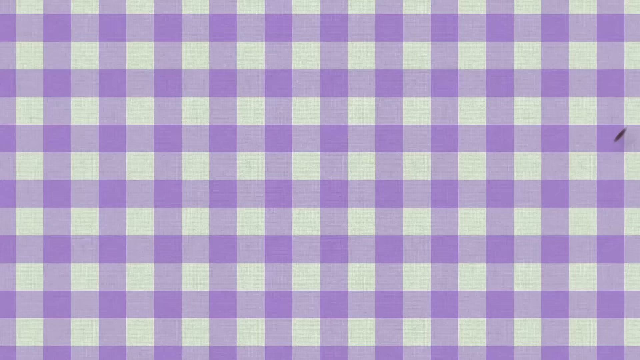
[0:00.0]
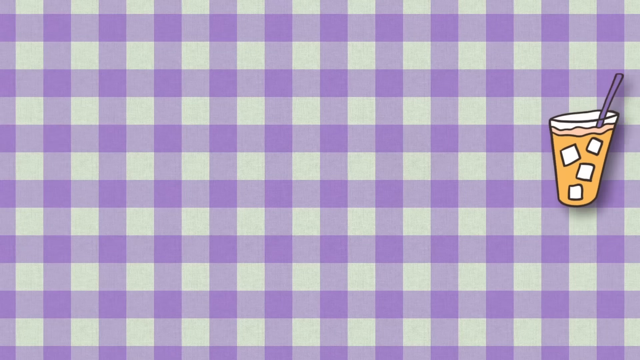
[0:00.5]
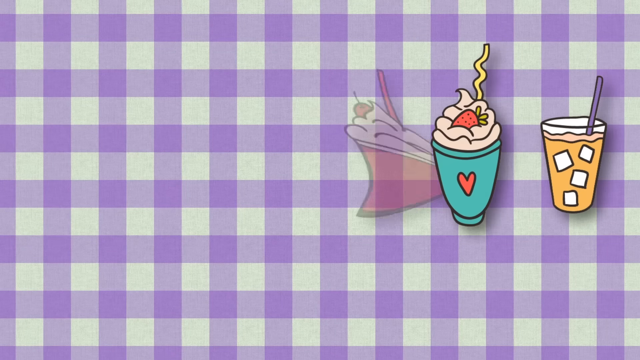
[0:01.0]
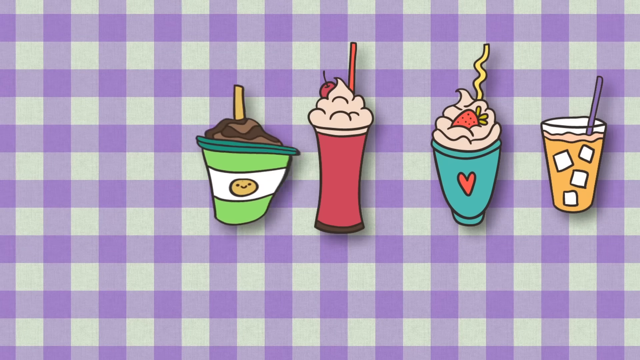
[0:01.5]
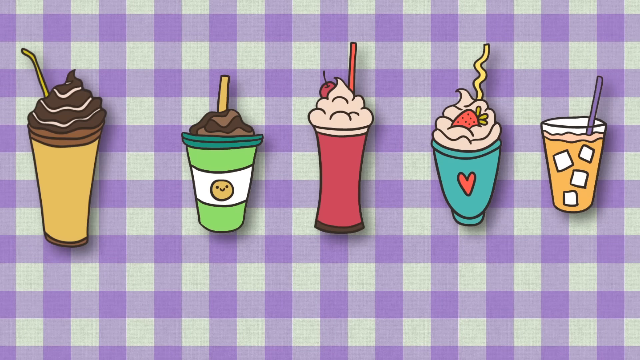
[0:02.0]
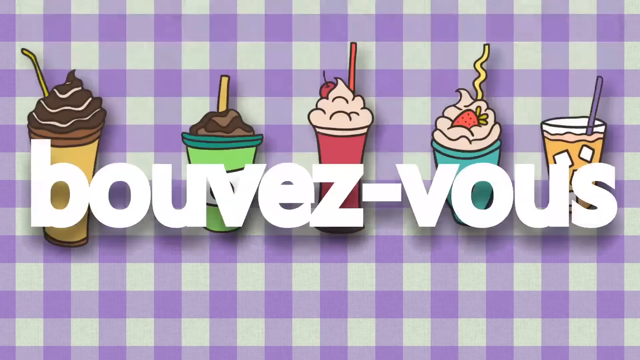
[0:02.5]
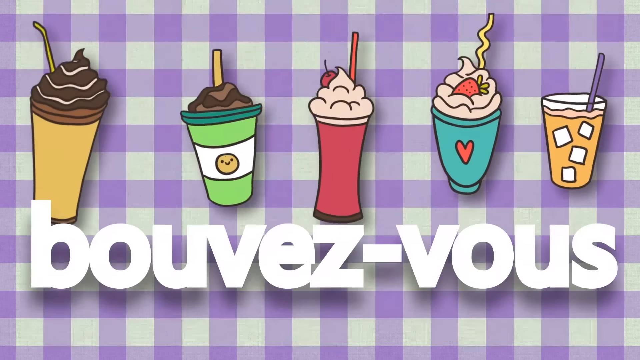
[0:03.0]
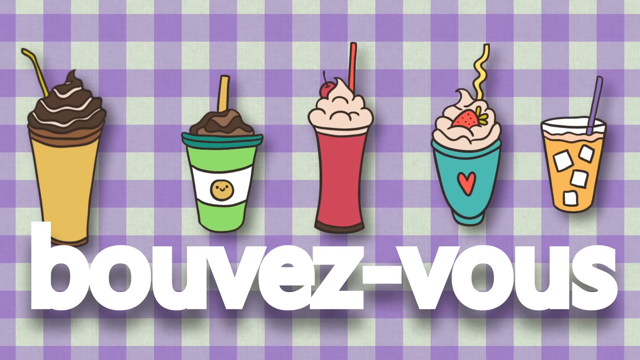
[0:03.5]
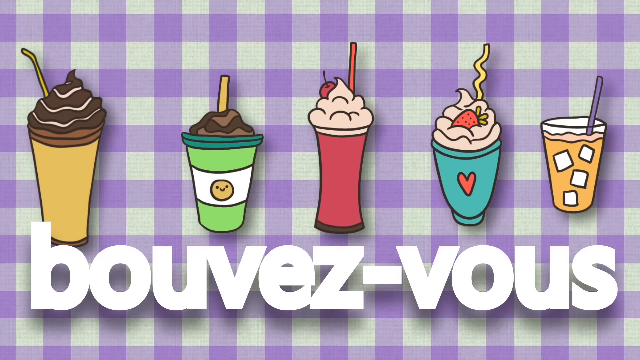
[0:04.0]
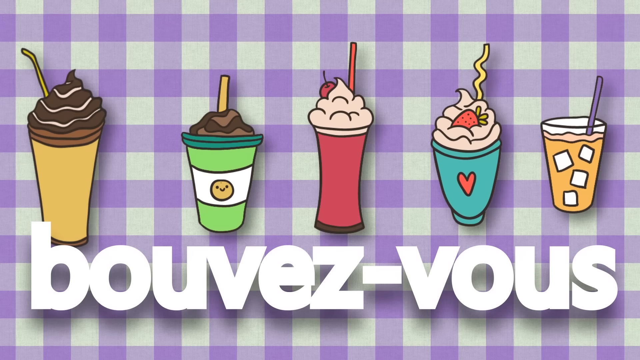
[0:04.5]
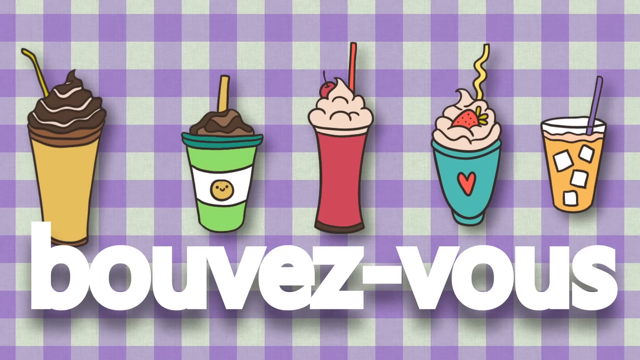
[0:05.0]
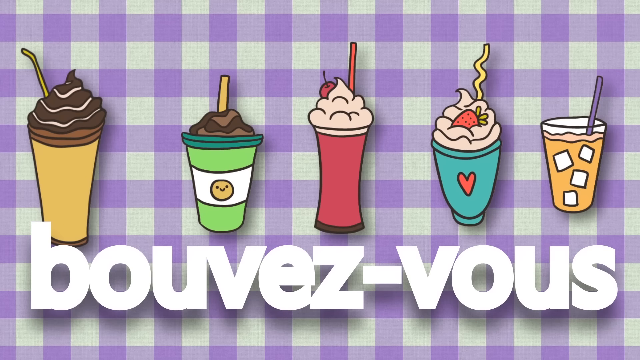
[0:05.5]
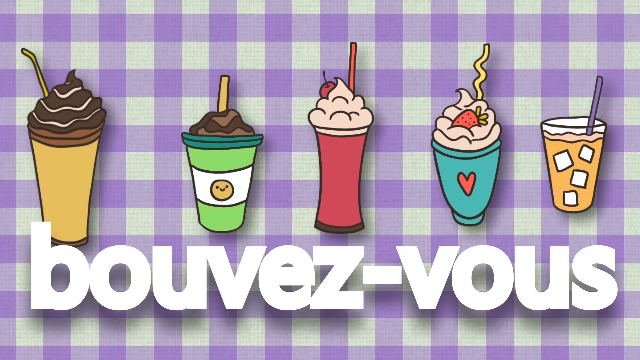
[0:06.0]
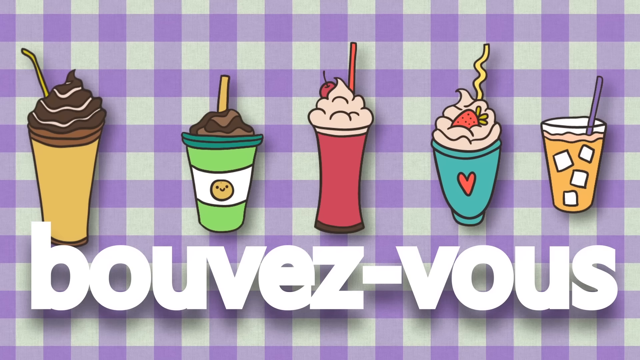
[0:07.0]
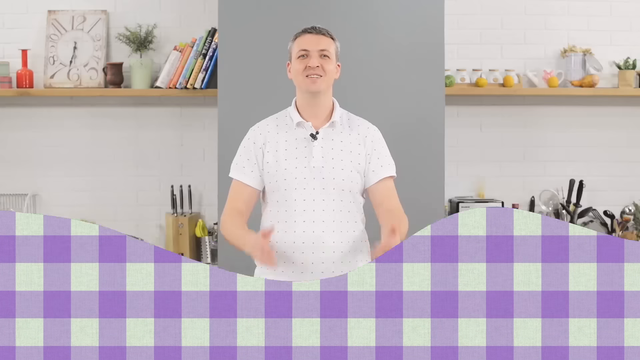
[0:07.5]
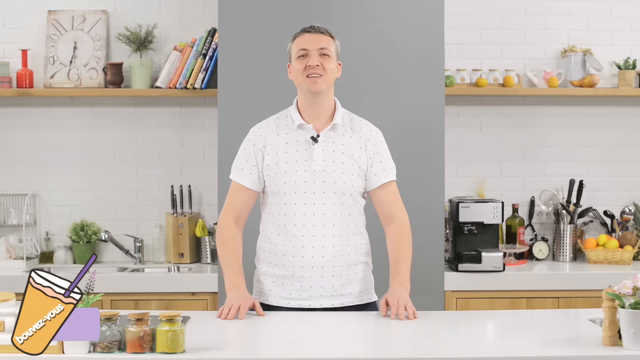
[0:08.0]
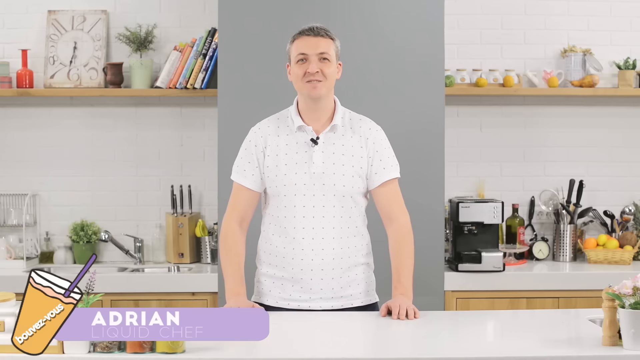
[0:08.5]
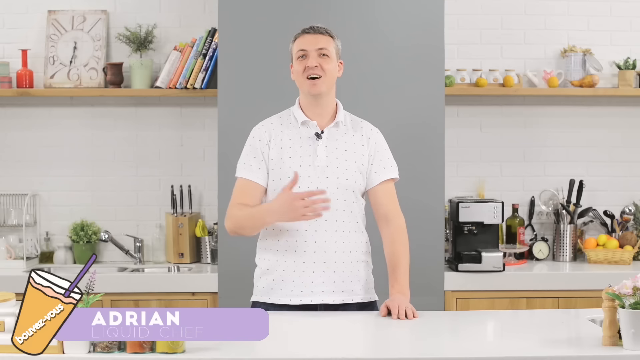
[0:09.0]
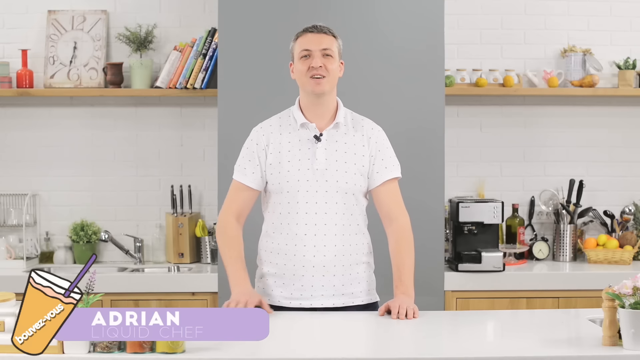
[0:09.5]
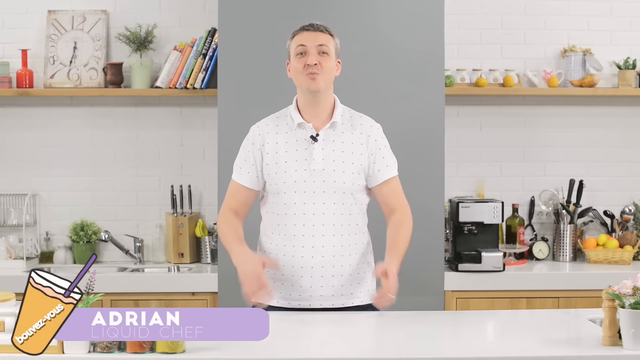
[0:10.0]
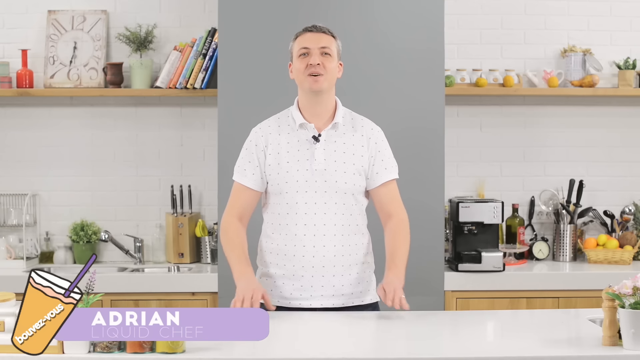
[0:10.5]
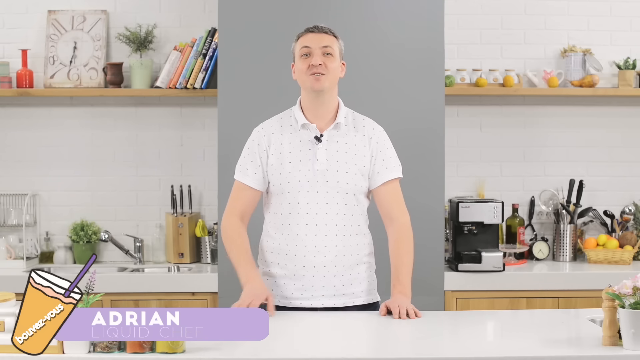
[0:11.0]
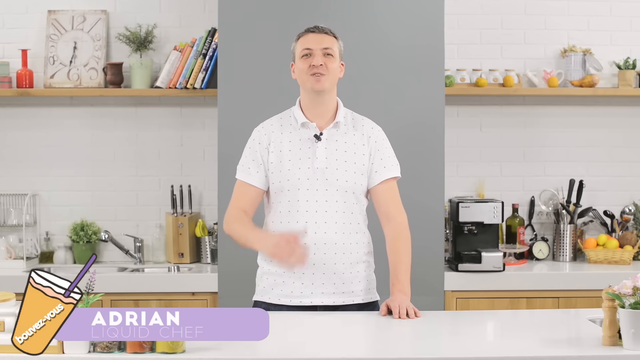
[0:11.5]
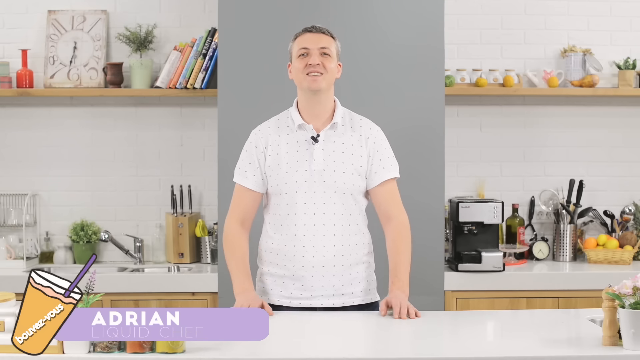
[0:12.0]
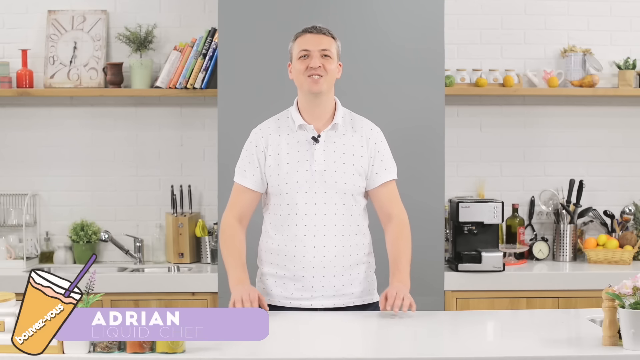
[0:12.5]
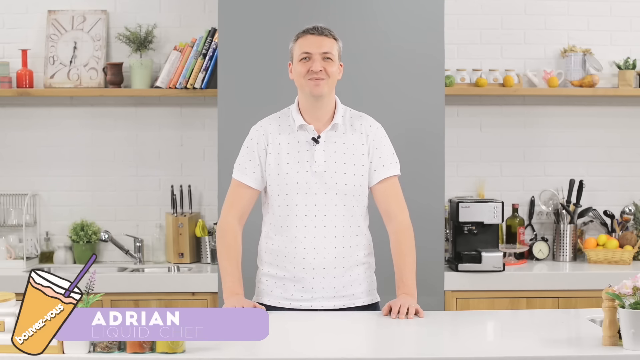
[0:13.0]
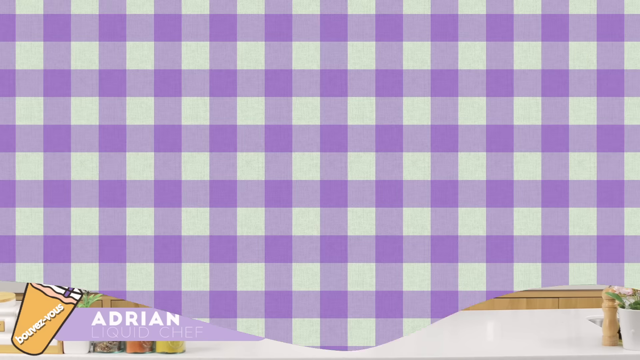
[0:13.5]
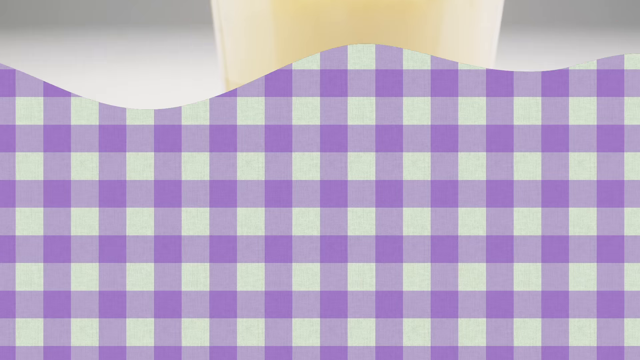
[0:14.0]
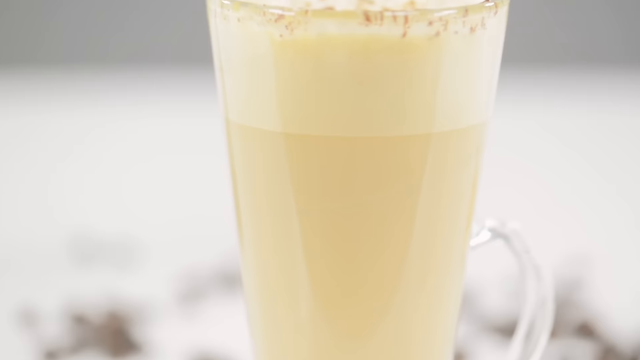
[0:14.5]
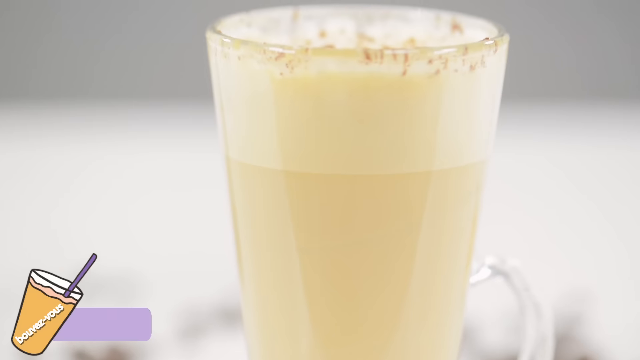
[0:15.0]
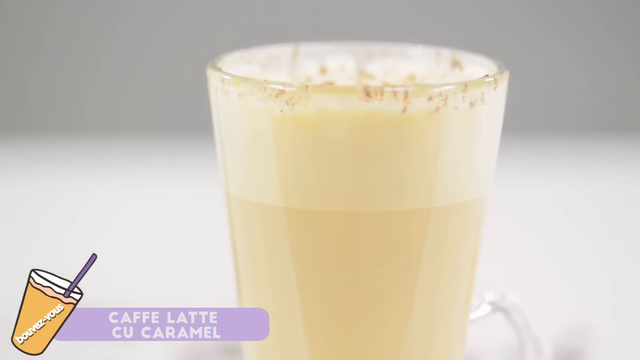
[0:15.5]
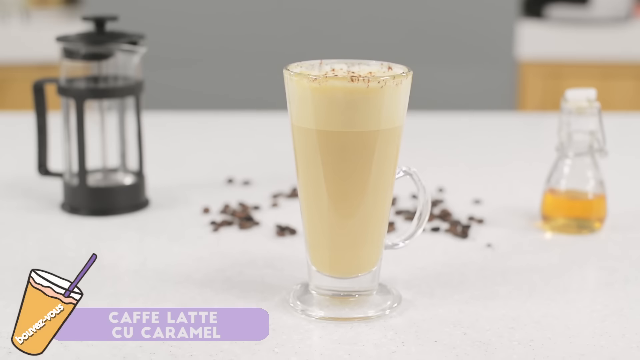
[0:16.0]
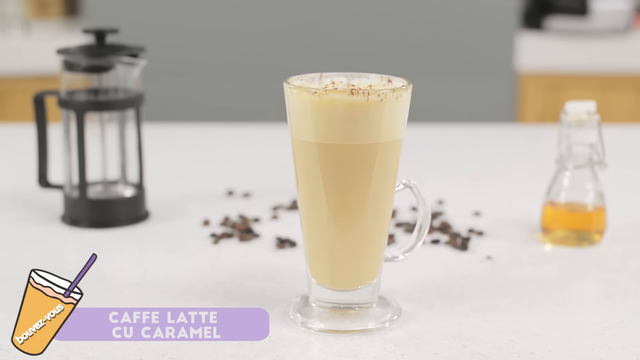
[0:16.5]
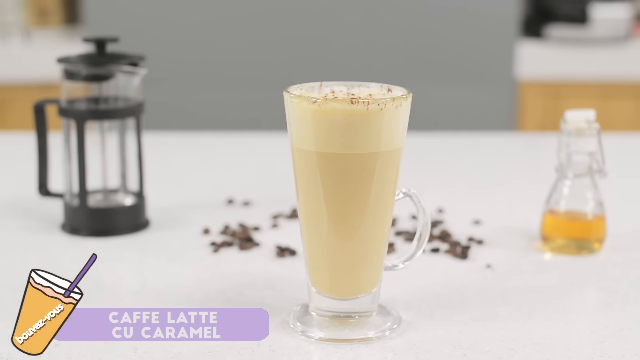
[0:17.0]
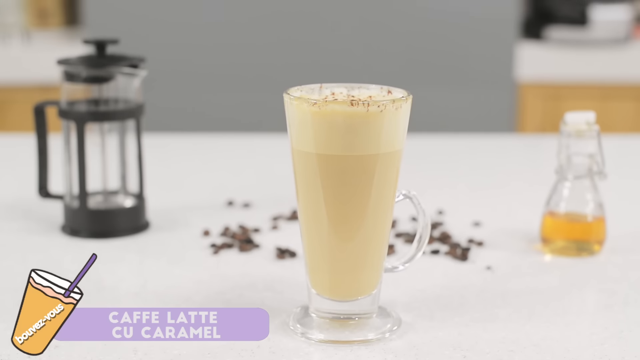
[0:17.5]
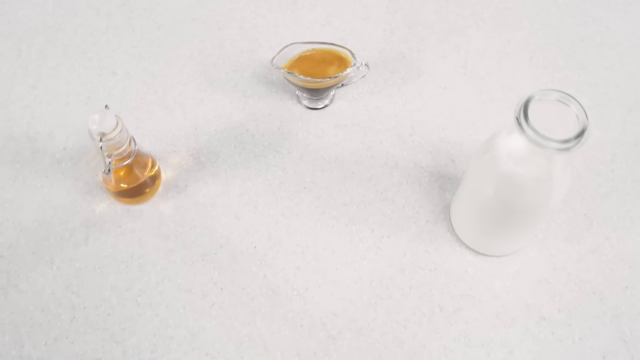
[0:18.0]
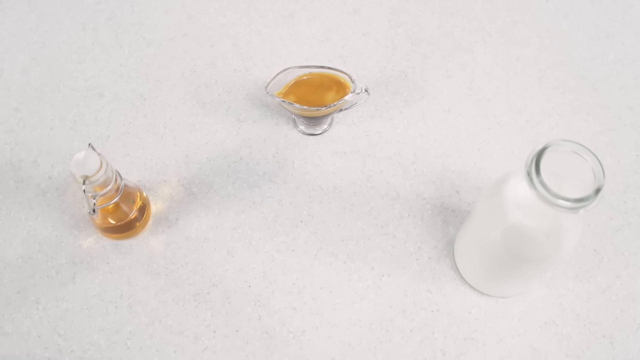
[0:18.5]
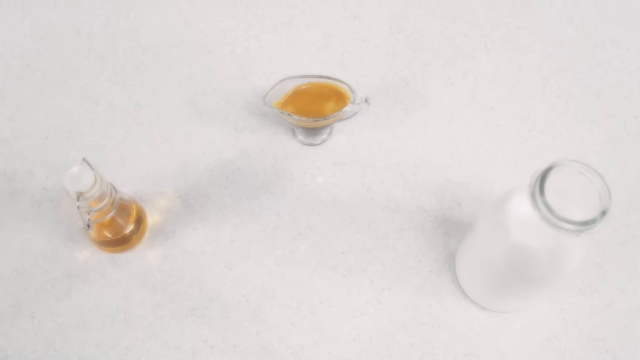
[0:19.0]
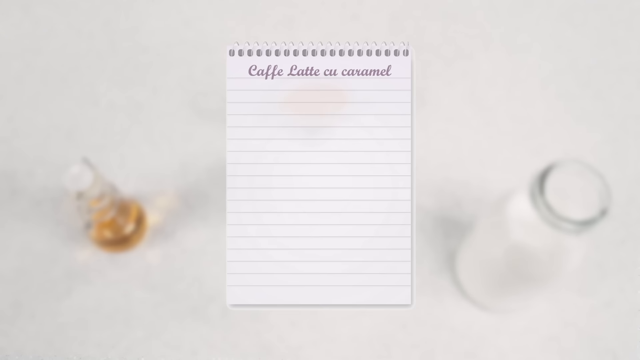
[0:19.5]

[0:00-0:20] An opening graphic shows a series of illustrated beverages appearing across the screen against a purple and white gingham backdrop, with the words "bouvez-vous" appearing at the bottom of the screen. A man identified as Adrian then stands behind a counter in a kitchen, wearing a short-sleeved white shirt and speaking directly to the camera. Behind him are a sink on the left and kitchen appliances and utensils lined up along the wall. There are some books on a bookshelf on the left, and a clock and what look like small mugs and teapots on the right side of the shelf. The shot changes to the same purple and white gingham background, which fades to a close-up of a drink in a glass with a handle. The drink is beige and appears to have foam on top. The name "Cafe Latte du Caramel" appears in the lower left corner.